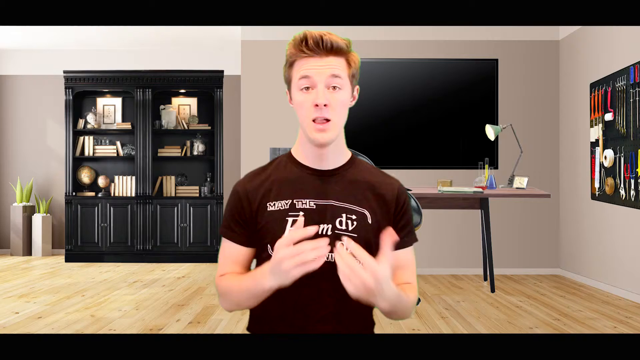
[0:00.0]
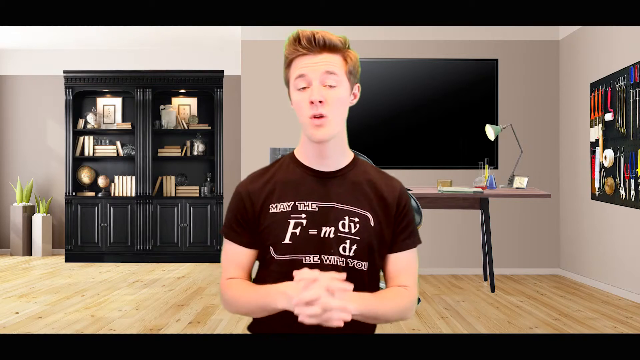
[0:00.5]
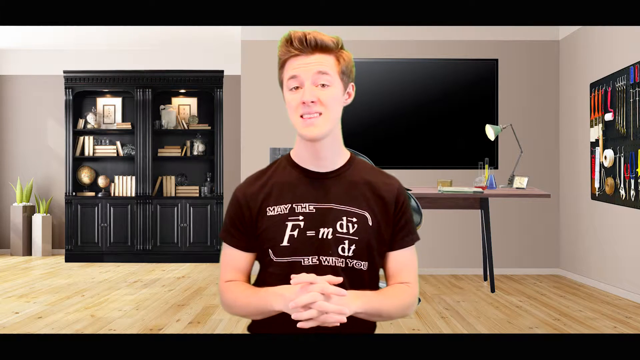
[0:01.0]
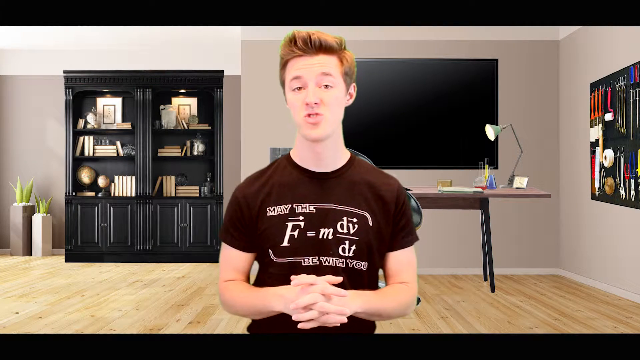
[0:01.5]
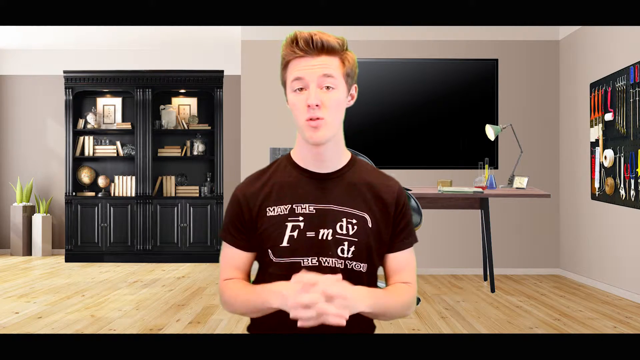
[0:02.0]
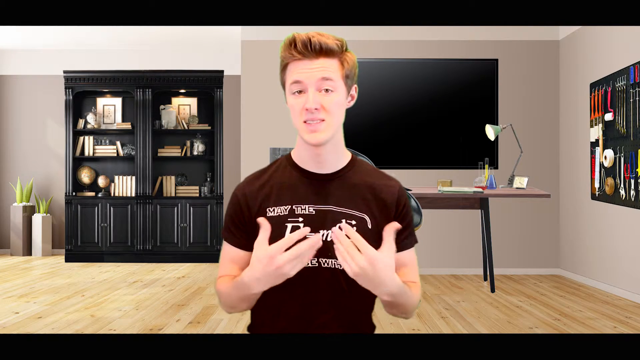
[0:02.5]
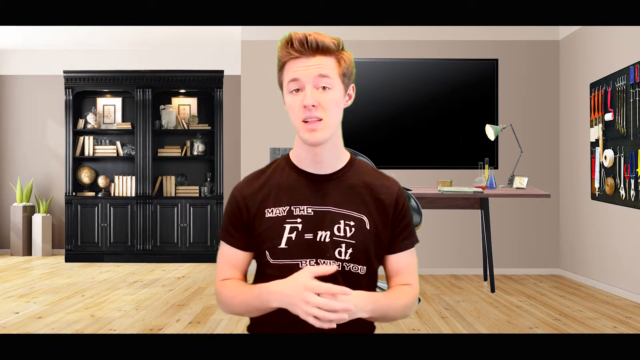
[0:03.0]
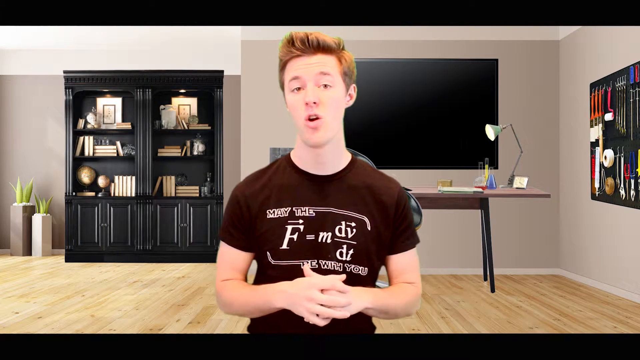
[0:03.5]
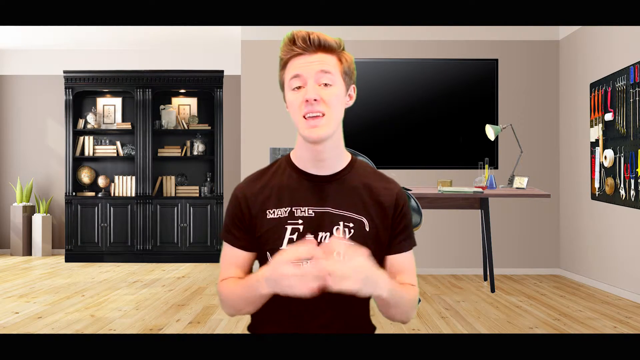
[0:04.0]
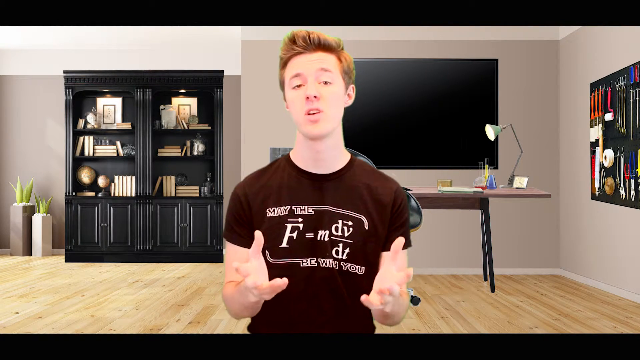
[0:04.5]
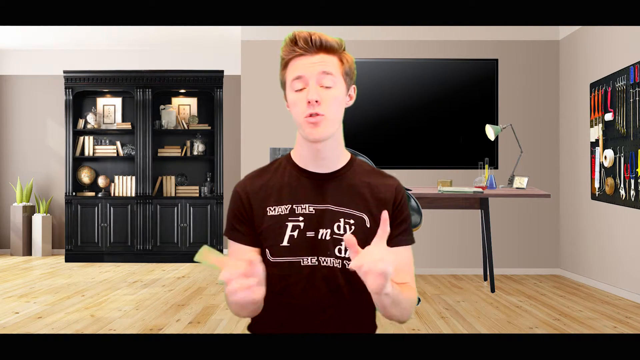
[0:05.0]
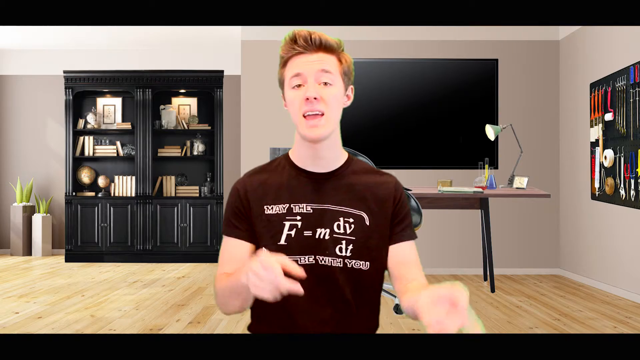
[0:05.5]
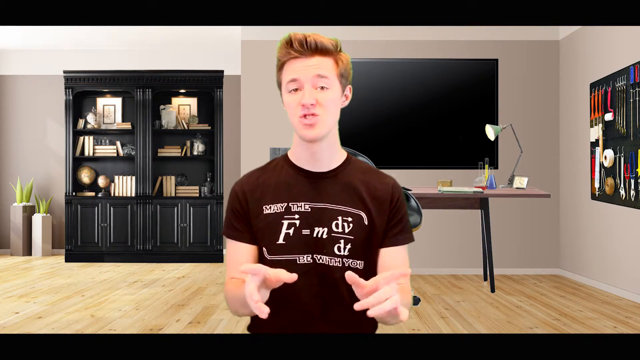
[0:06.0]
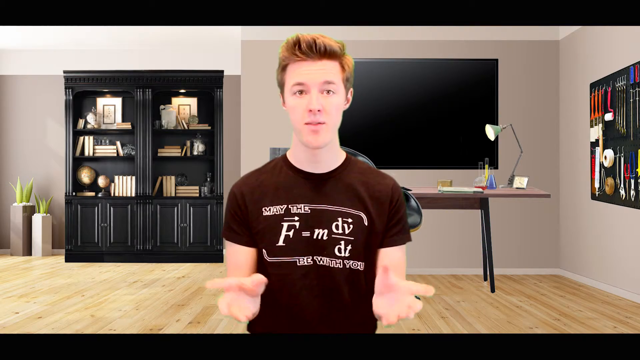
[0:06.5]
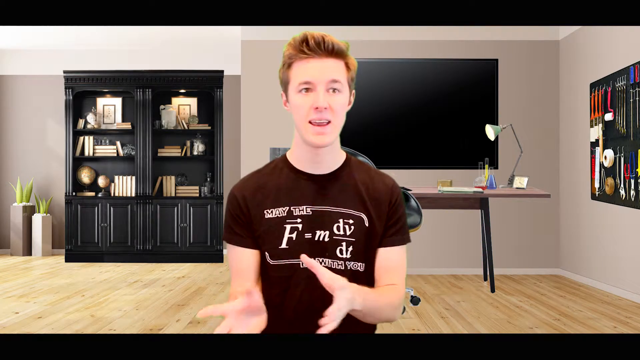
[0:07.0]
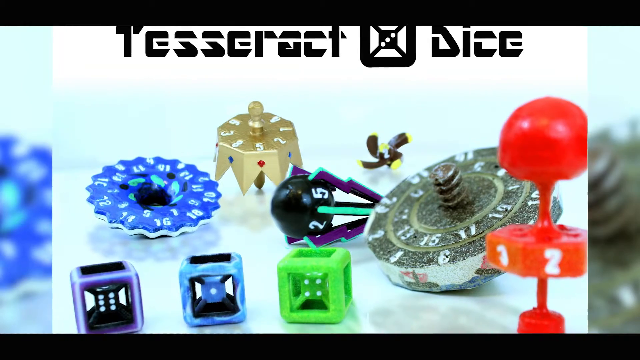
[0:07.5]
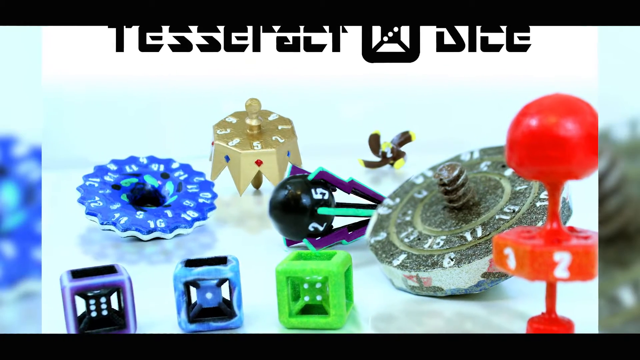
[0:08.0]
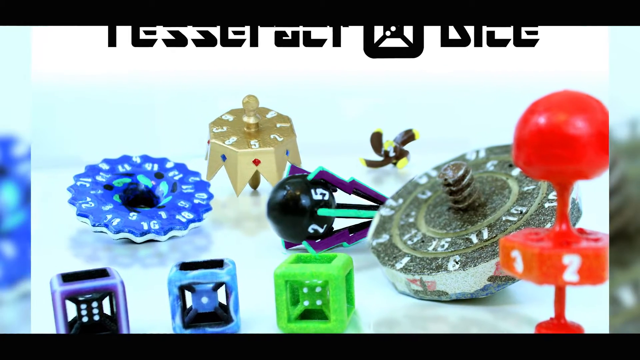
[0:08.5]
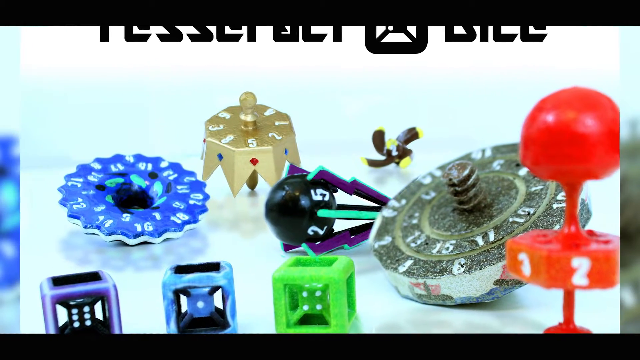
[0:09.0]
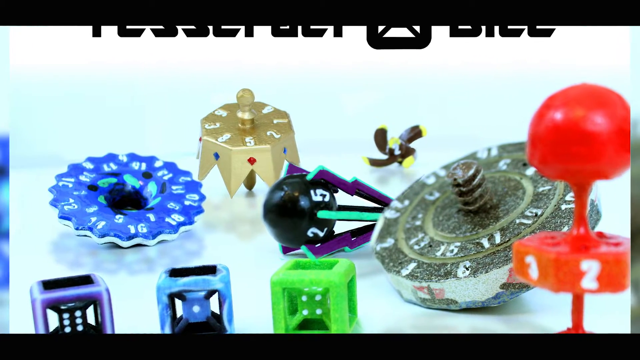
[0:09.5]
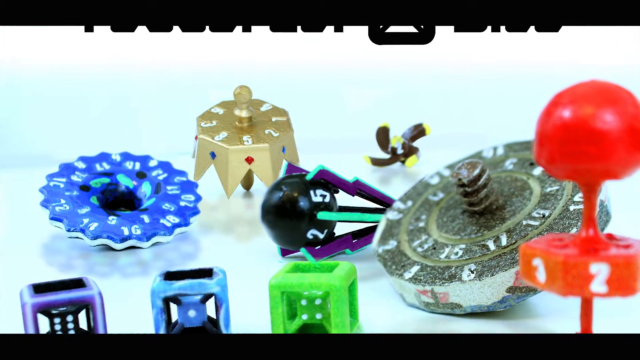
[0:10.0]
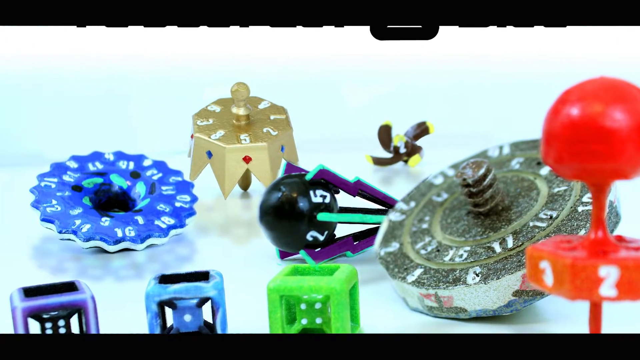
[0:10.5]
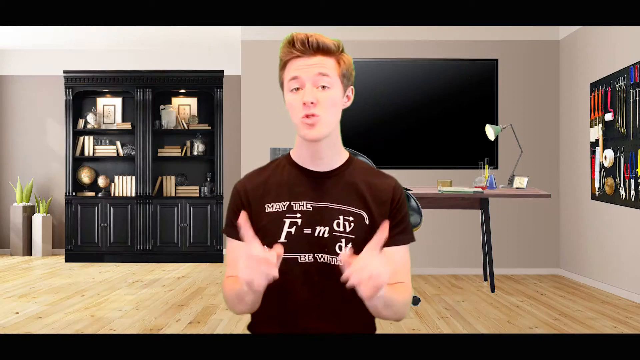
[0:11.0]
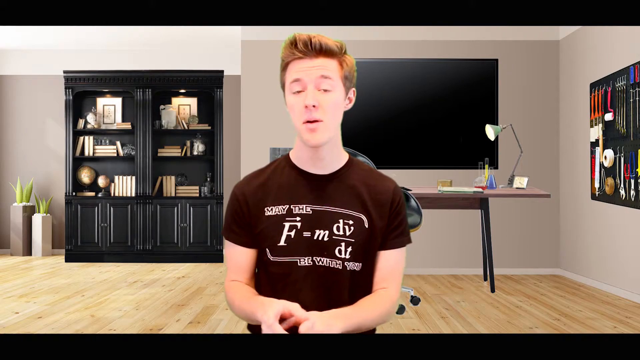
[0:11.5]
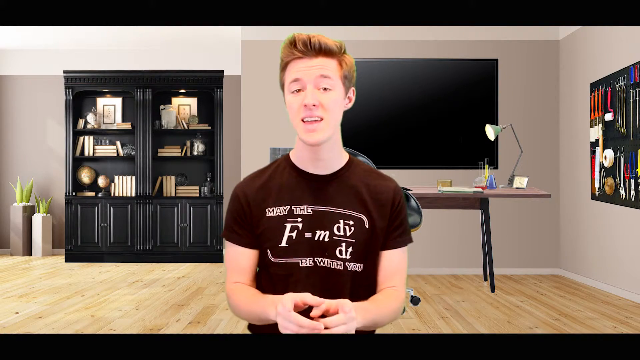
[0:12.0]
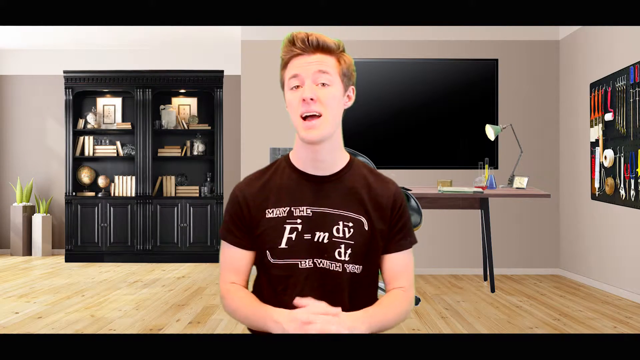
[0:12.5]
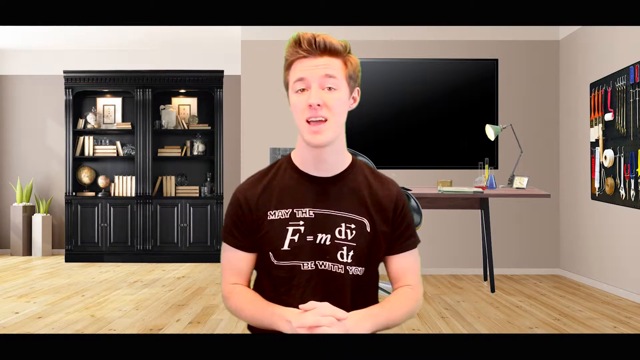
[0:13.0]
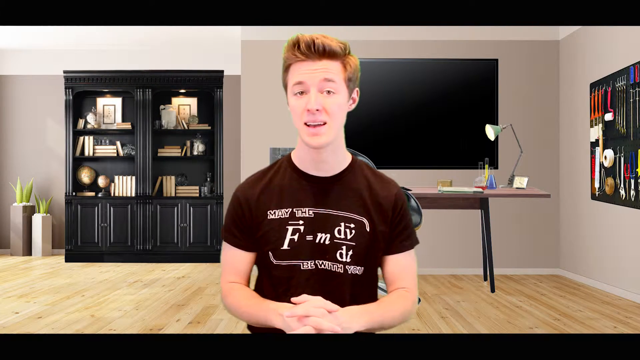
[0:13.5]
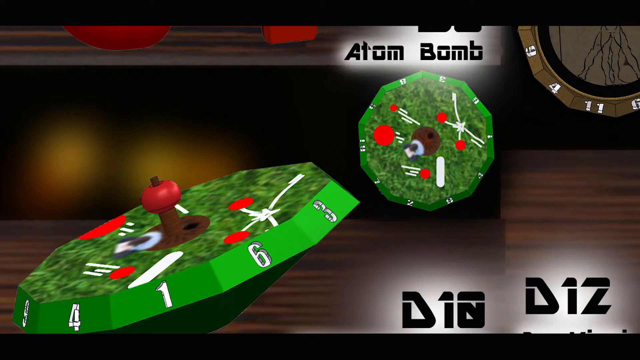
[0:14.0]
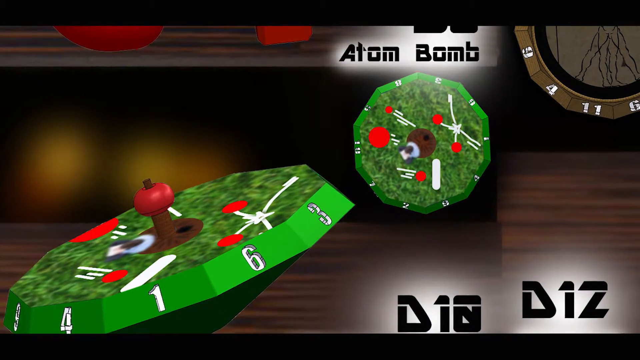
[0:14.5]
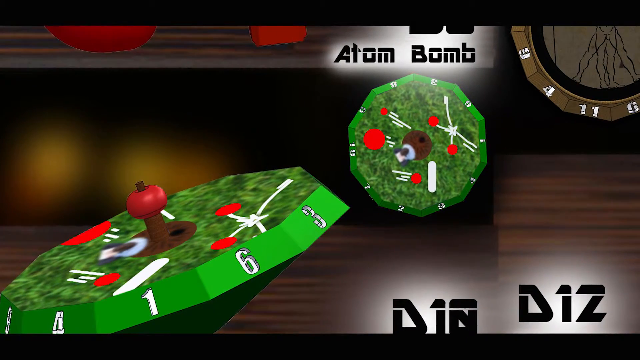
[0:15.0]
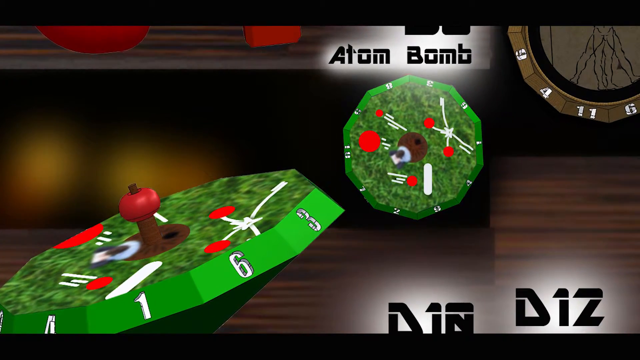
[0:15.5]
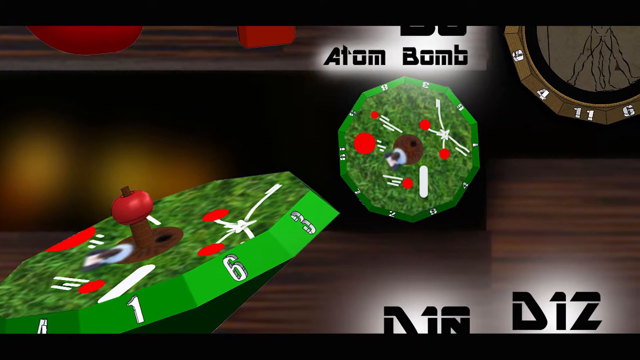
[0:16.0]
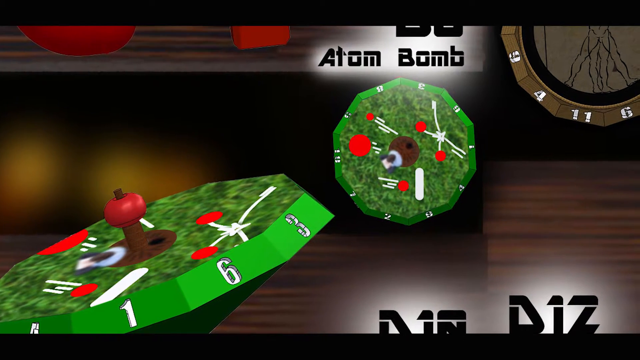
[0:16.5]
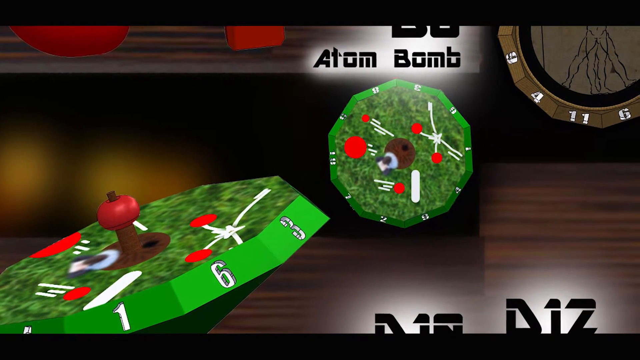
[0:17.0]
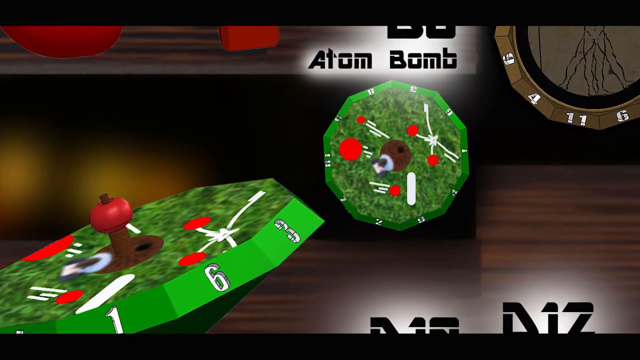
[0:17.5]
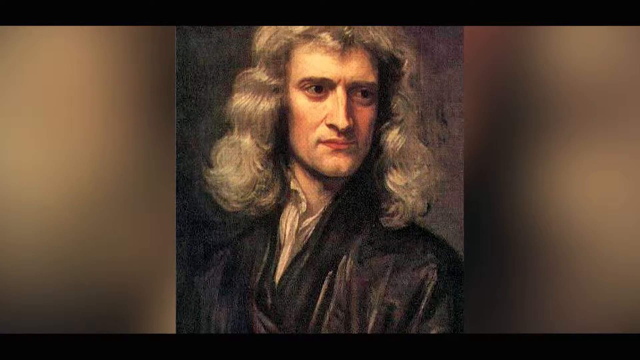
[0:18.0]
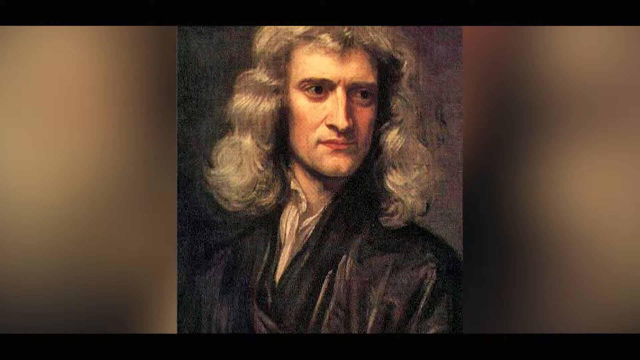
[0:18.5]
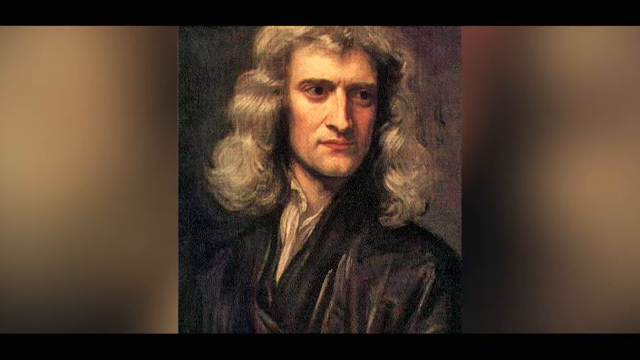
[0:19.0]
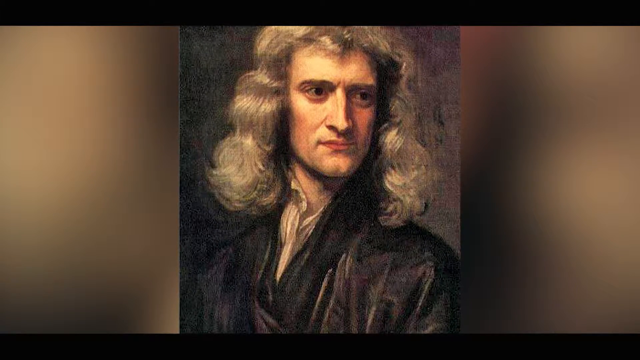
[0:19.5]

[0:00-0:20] A man who looks like he is in his late teens talks while making many gestures with his hands. He wears a black t-shirt with equations on it: f equals m times dv divided by dt, with the words "may the equation be with you". Behind him is a black bookshelf with doors at the bottom, holding many books placed in different styles. There are two globes on the left side of the bookshelf, along with green plants that look like aloe. Behind his head is something that looks like a big screen or a big board, and in front of that board is a table with a lit lamp and science items: test tubes holding blue, red, and yellow liquids. On the wooden wall on the right-hand side there are tools. Objects in red, green, blue, purple, gold, silver, and black then appear on the screen; they look like dice, since the word "dice" appears above them. The boy is shown talking, and then objects in green, white, and red appear, with numbers written on them in white. At the bottom of the screen is written "D10" and "D12".